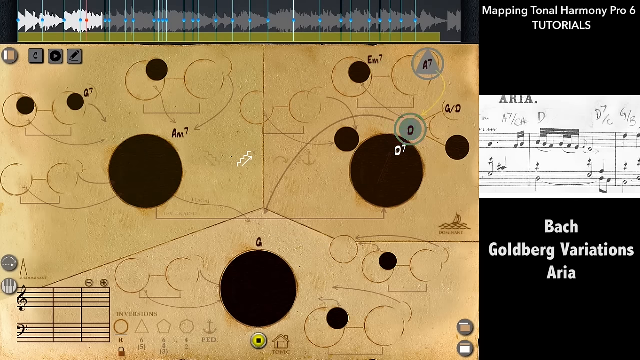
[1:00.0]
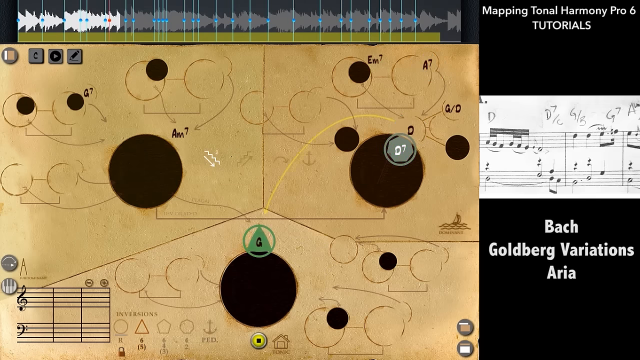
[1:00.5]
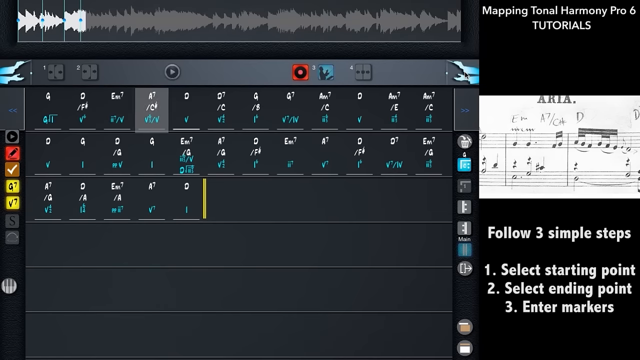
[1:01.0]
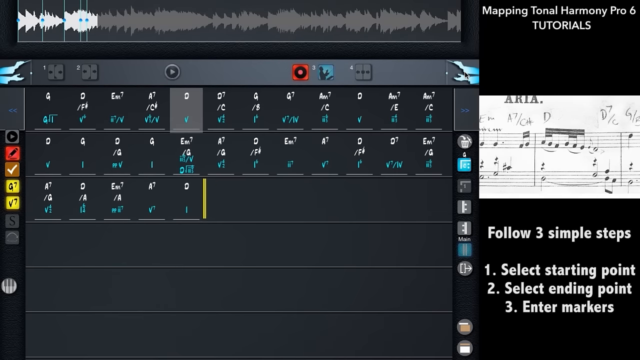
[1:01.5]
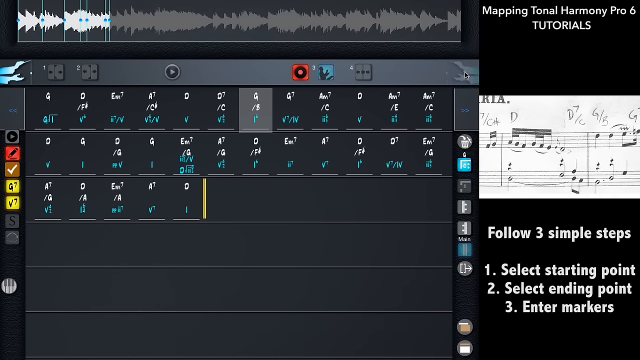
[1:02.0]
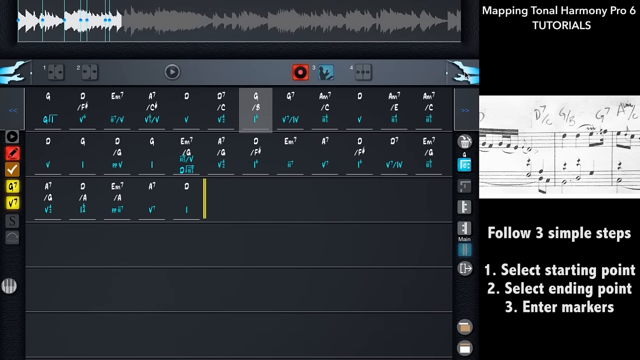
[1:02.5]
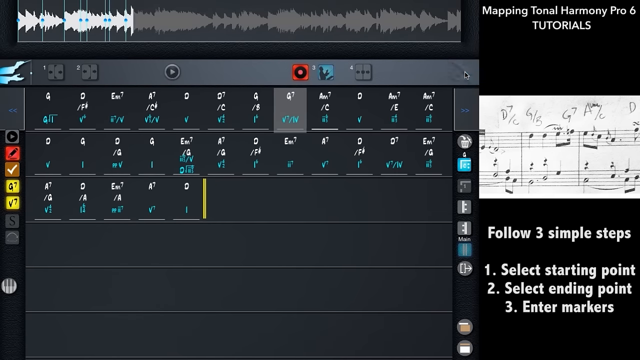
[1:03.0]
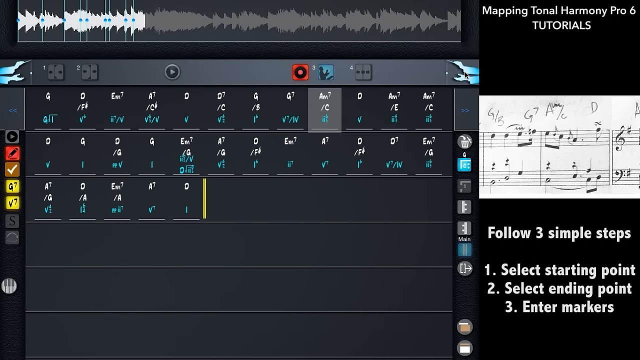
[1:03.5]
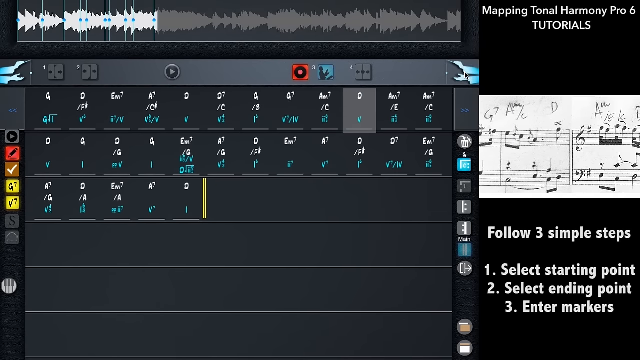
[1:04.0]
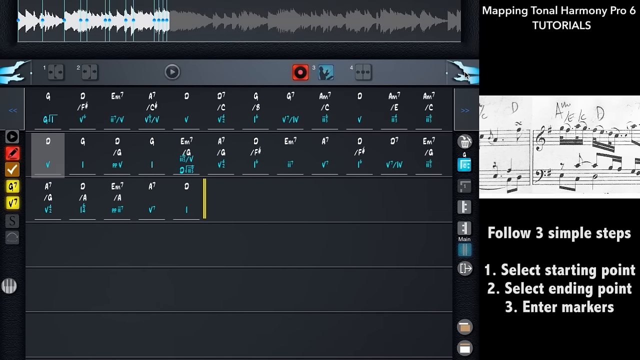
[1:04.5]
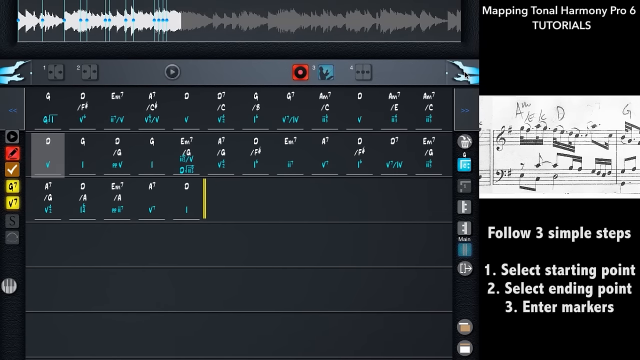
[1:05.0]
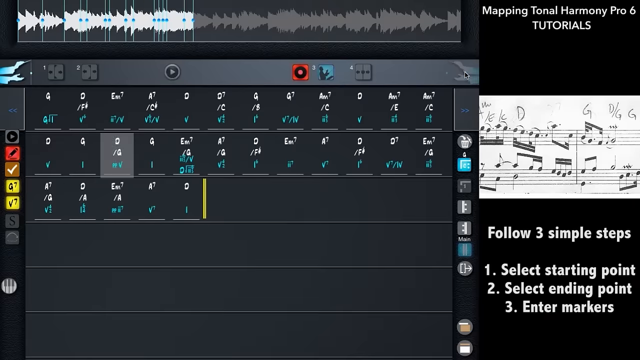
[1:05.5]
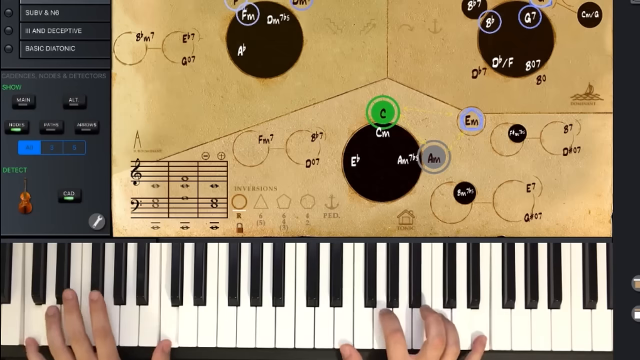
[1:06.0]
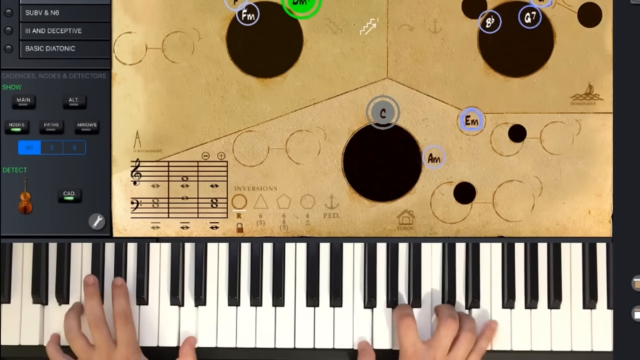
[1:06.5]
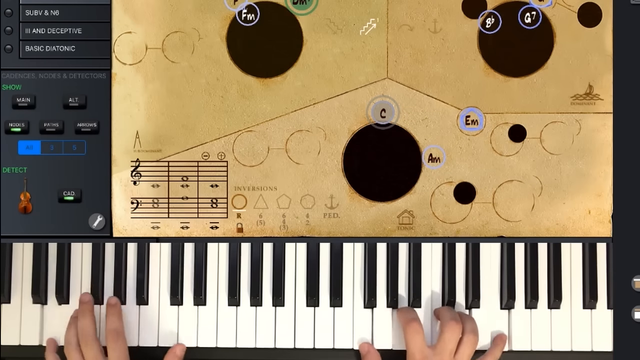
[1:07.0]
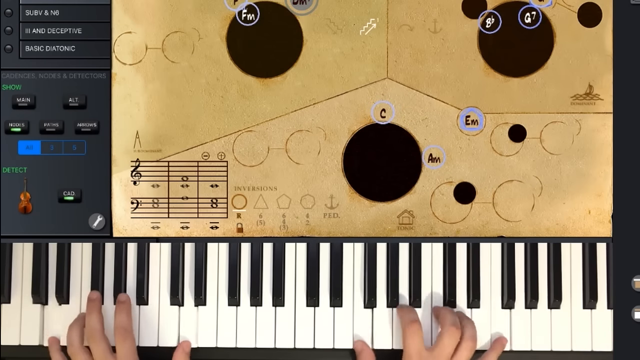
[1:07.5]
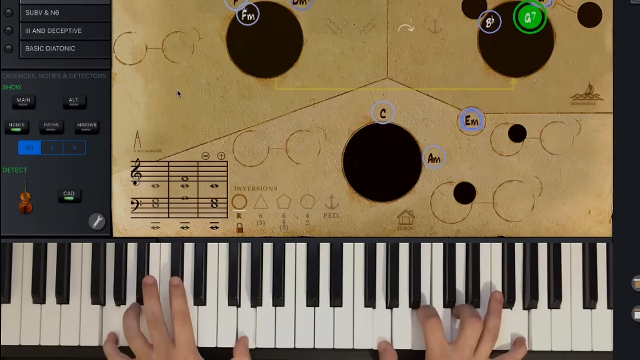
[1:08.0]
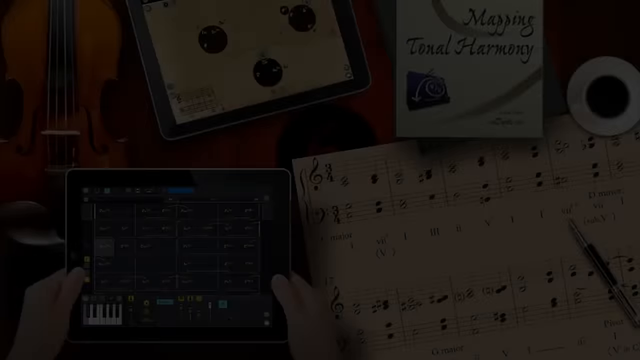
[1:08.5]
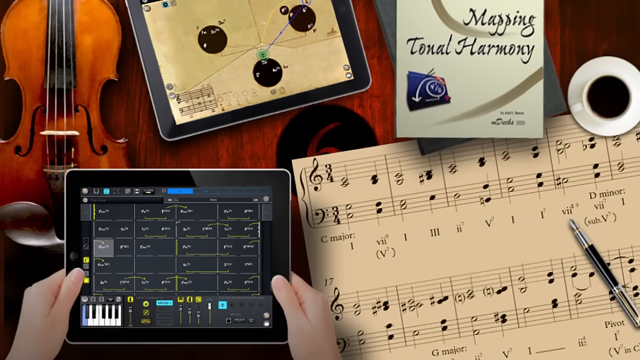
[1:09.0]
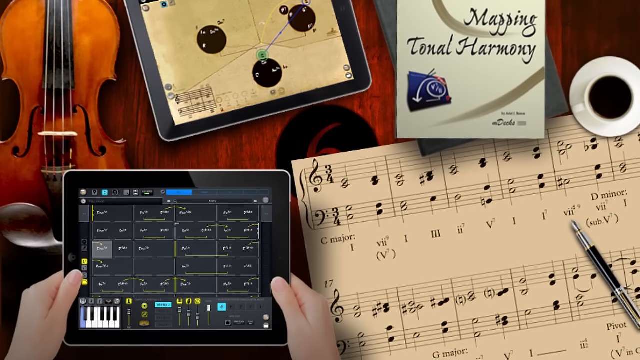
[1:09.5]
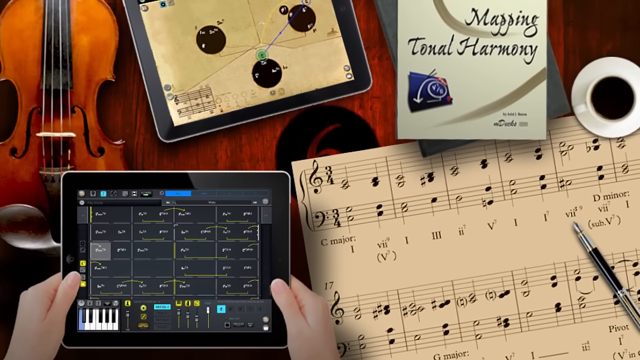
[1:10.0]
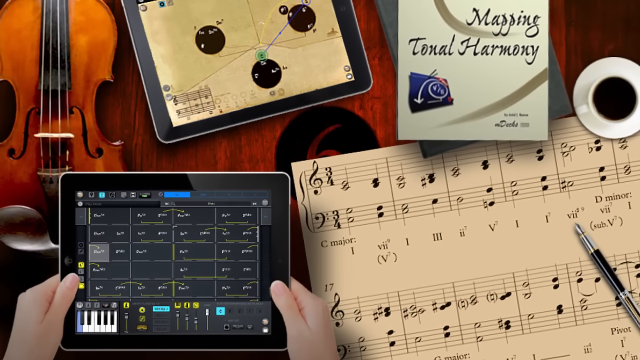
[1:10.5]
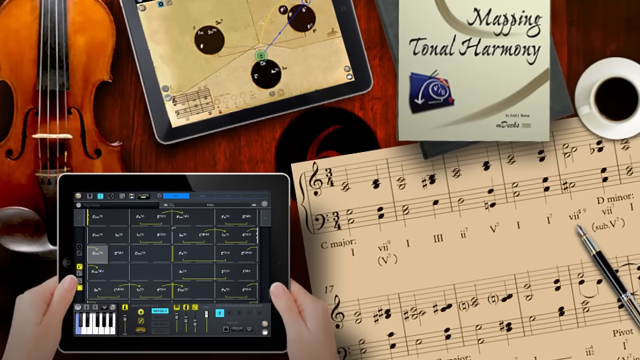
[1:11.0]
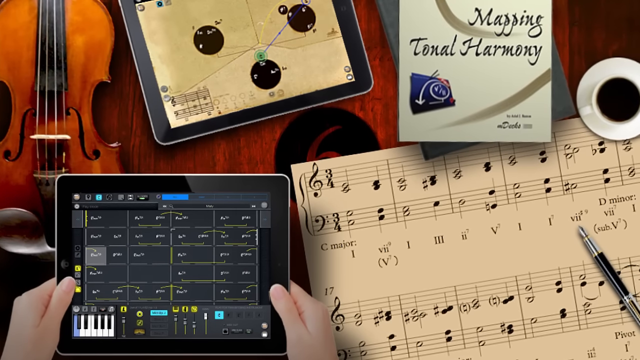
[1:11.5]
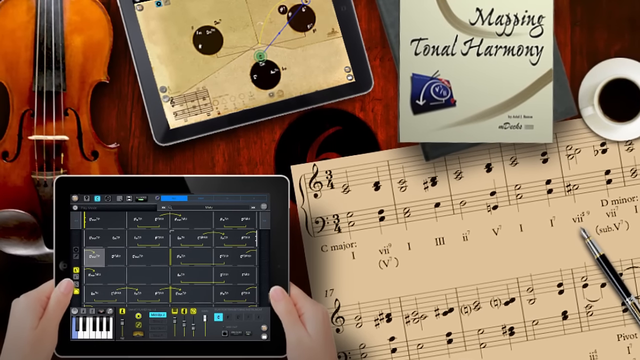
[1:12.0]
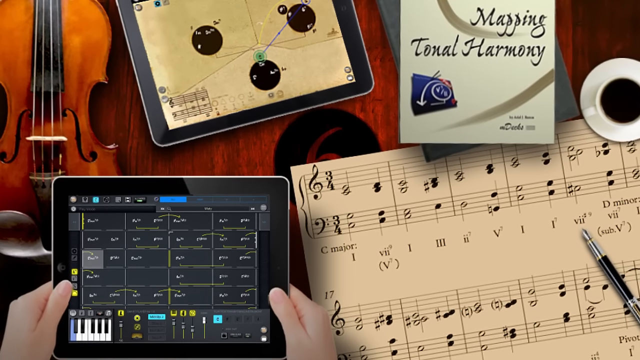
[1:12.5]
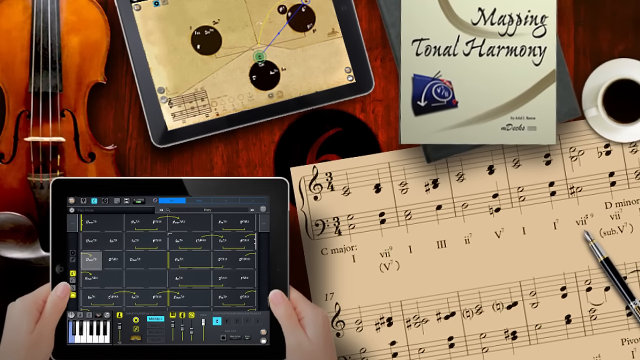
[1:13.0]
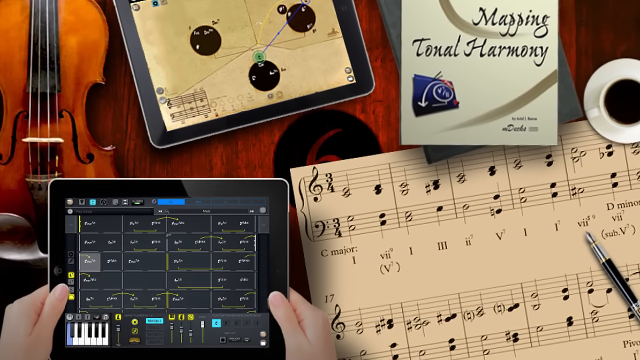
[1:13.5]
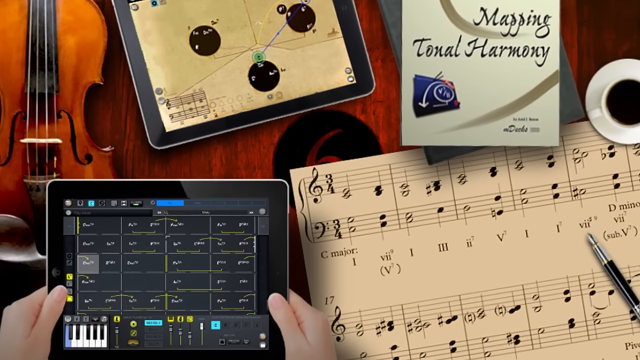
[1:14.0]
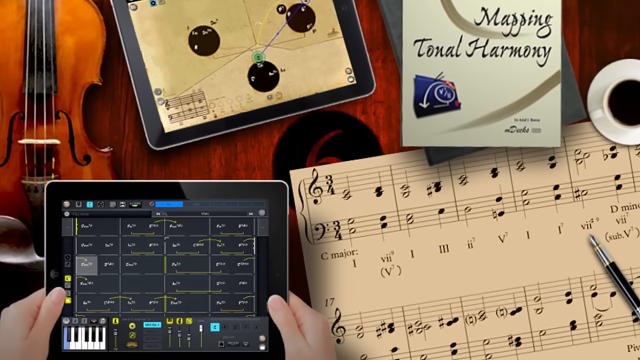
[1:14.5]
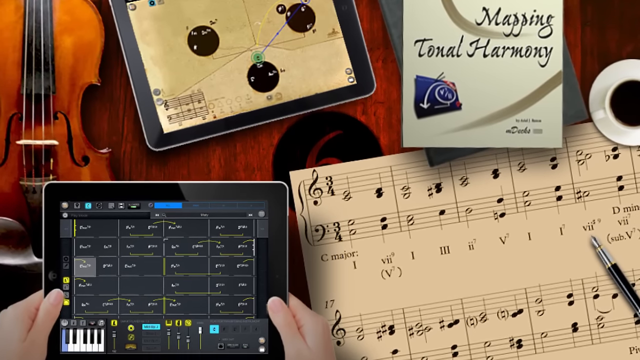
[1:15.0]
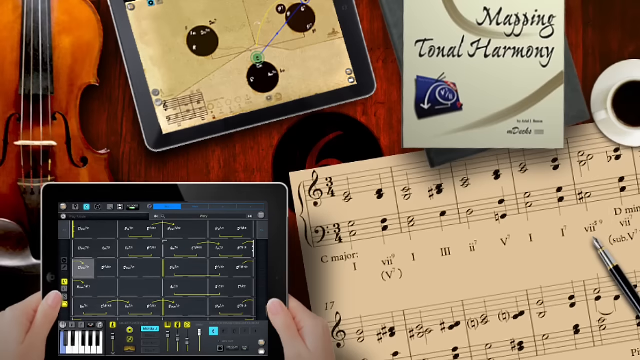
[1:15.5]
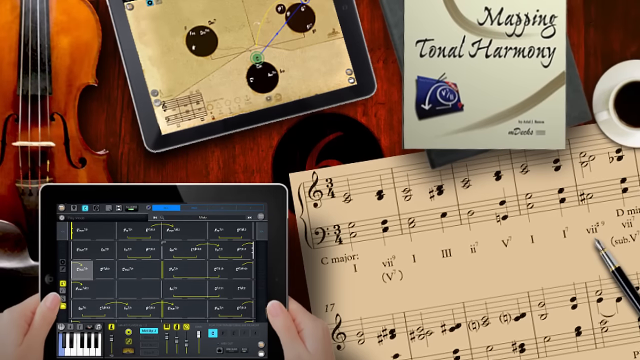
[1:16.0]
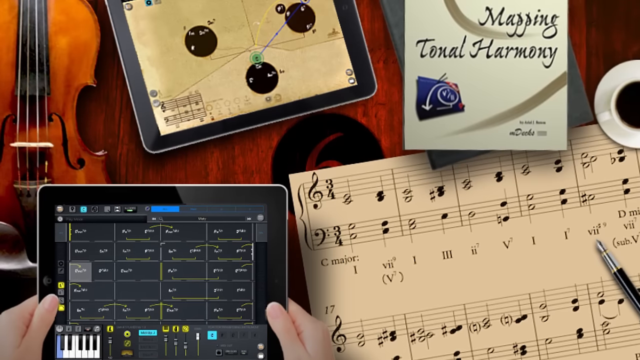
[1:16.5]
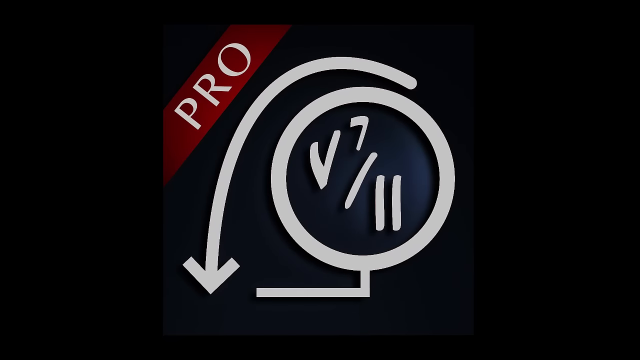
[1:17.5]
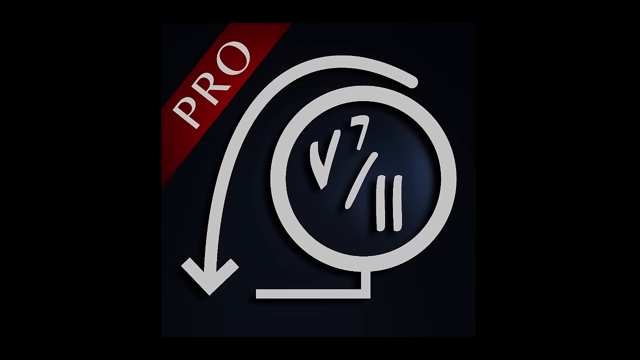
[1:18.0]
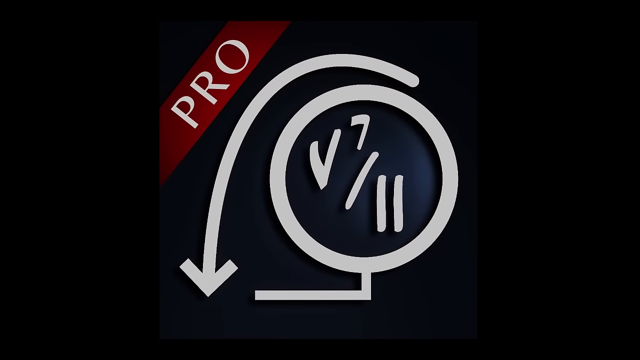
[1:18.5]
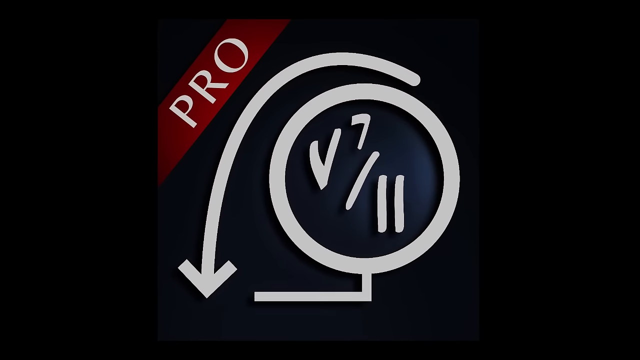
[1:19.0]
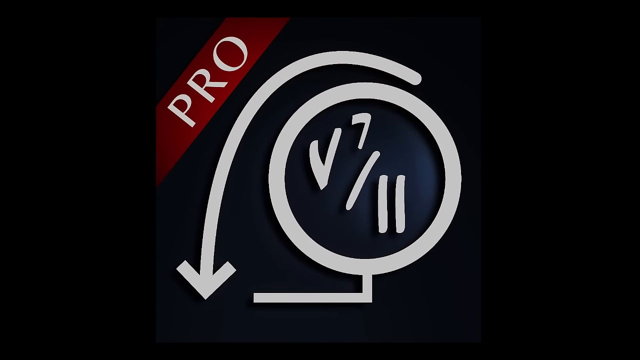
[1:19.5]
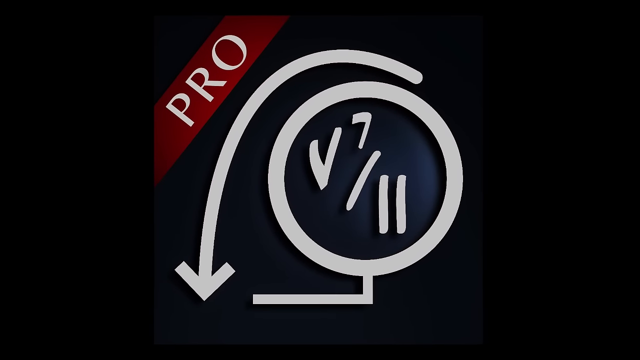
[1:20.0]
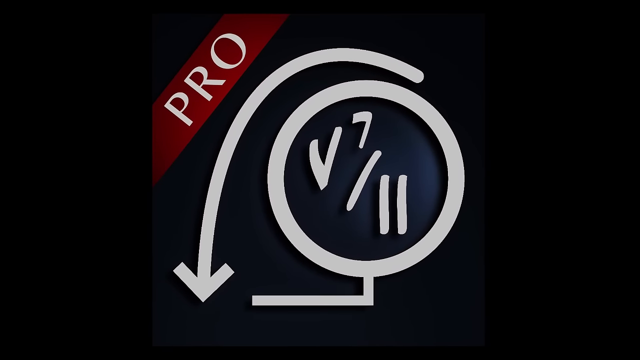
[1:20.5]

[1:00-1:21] Another interface appears. On the right side, the music sheet is still shown, and below it the text reads "follow three simple steps. Select starting point. Select ending point. Enter markers." On the left side is the main interface. At the top above it, a sound wave is scrolled through to the right; a lit section on the left progresses toward the right, and the right side is a darker gray. Below that is the main window, showing white text above blue text in different sections. These sections have off-white highlighting at the bottom and appear to be arranged in squares, though the squares have no lines on their sides. On the left side of the screen are yellow, orange and red buttons. Along the top are different icons, including a play button and what appear to be different sorting options. One of the squares in the top row is selected, and the view begins scrolling to the right, then moves down to the middle row and continues scrolling. This interface disappears, and a keyboard is shown being played from above: the keyboard is at the bottom, and two hands are visible touching the keys. In the top right of the screen is the brown cube with the dark circles. This fades out, and the video goes back to the original image of the table, again zooming in very slowly toward the center. This then disappears, and what appears to be an icon for computer software is shown: in its top left is a red ribbon with the word "pro" on it, and below that is some sort of diagram with a circle and an arrow looping over to the left side.